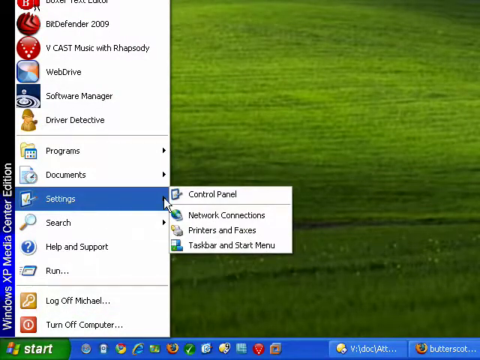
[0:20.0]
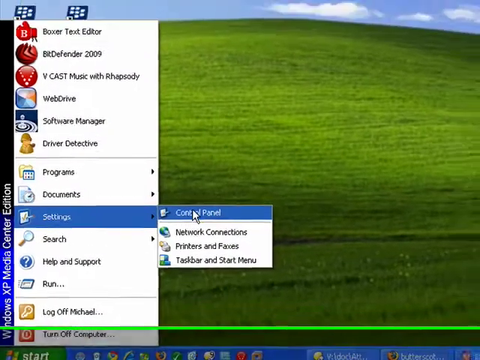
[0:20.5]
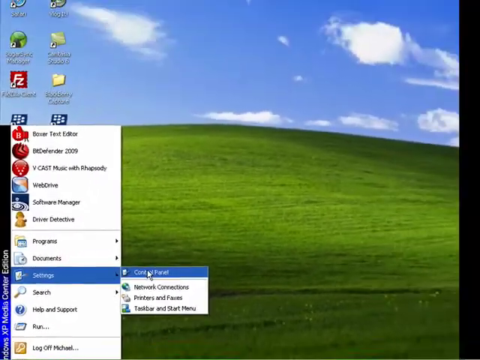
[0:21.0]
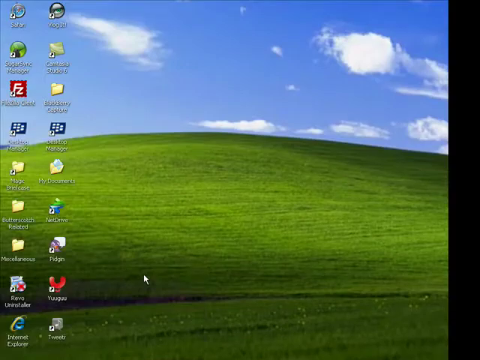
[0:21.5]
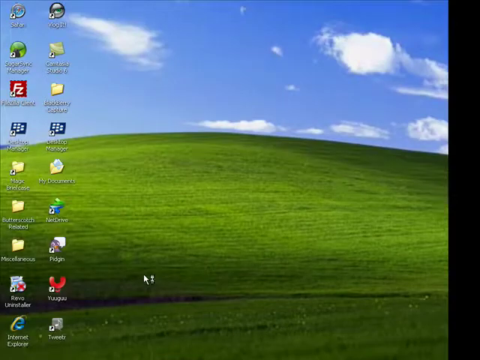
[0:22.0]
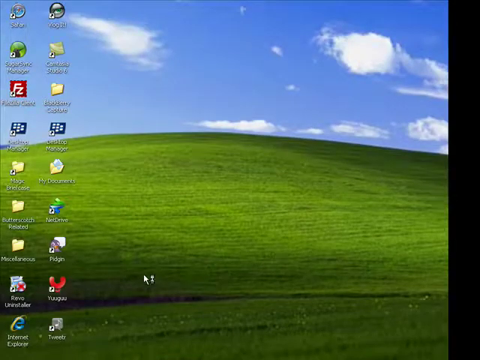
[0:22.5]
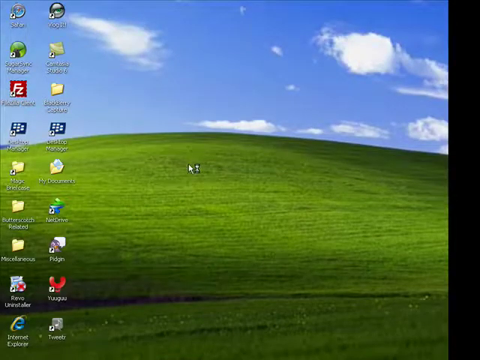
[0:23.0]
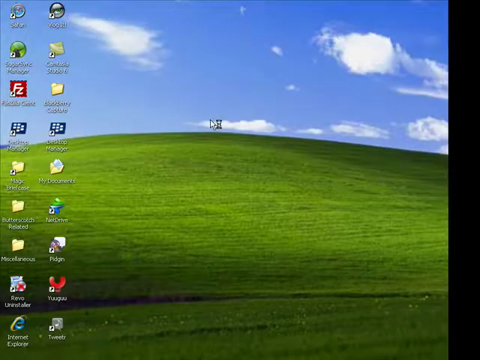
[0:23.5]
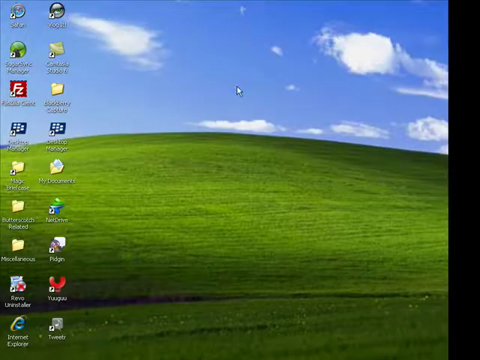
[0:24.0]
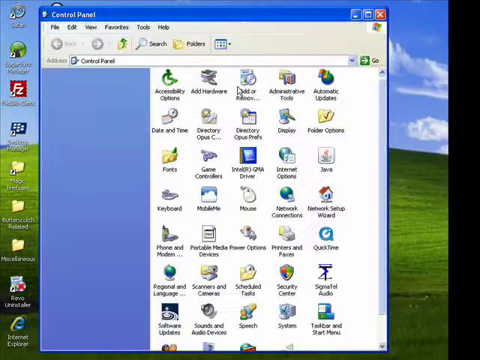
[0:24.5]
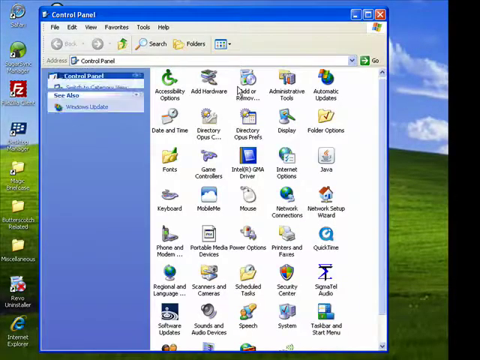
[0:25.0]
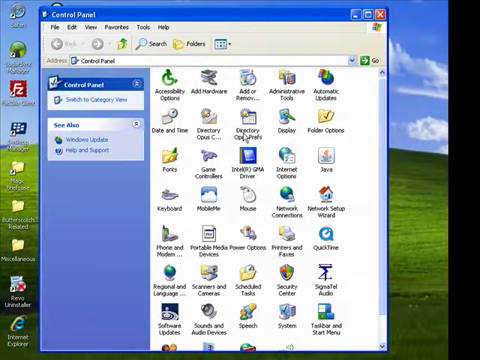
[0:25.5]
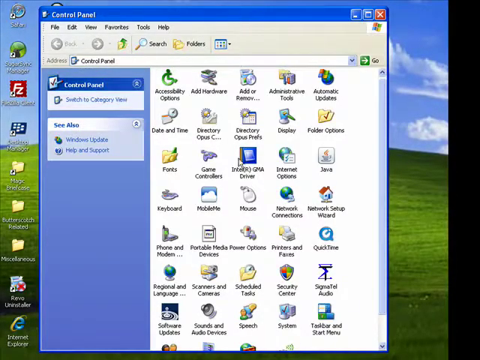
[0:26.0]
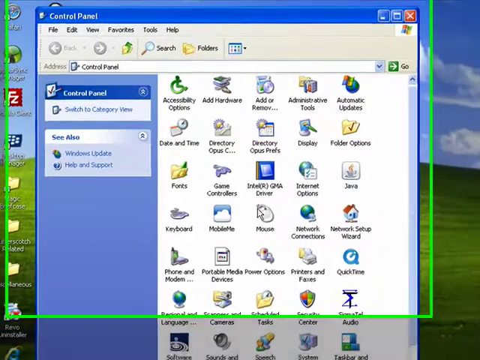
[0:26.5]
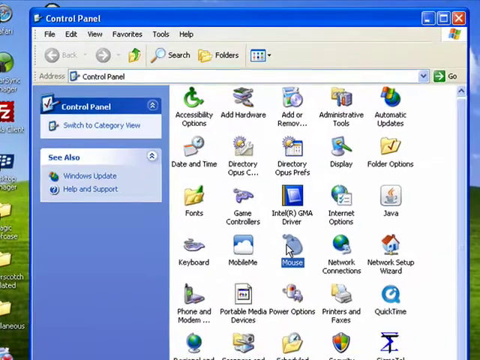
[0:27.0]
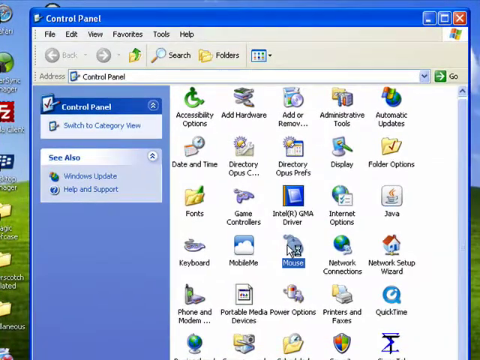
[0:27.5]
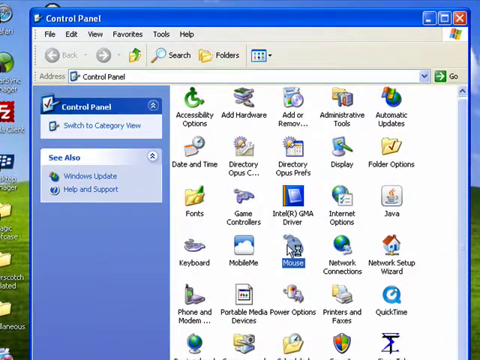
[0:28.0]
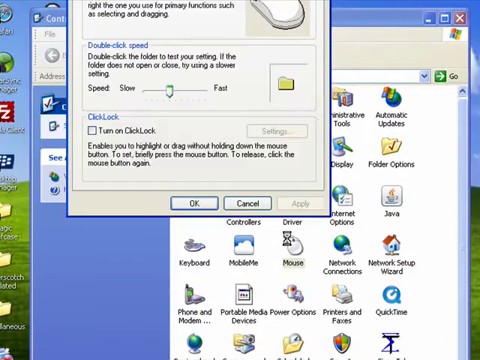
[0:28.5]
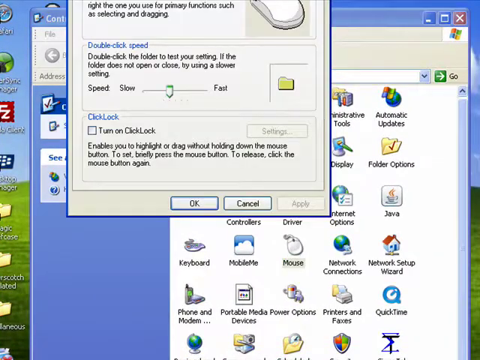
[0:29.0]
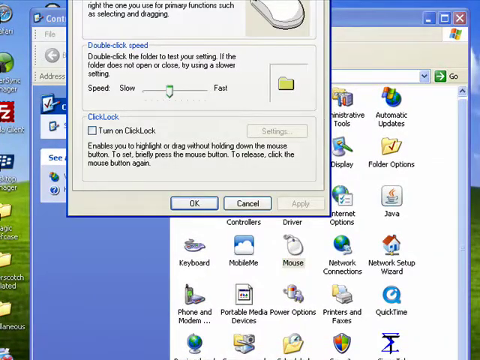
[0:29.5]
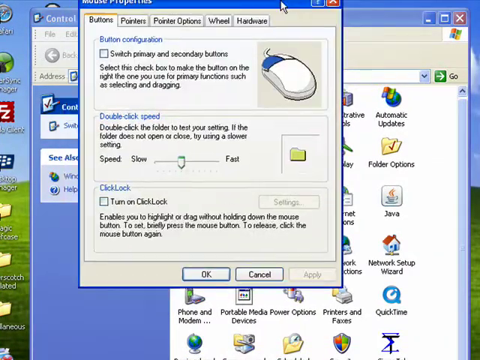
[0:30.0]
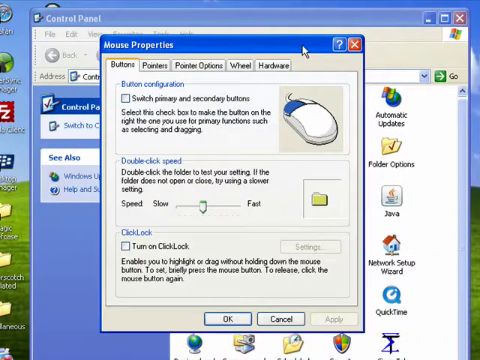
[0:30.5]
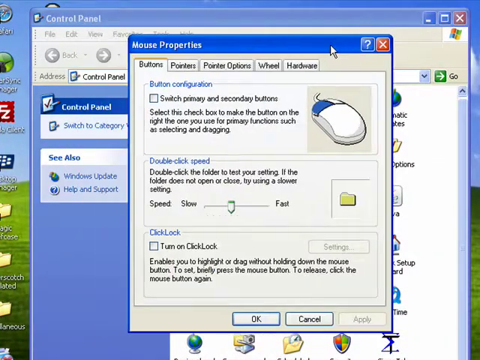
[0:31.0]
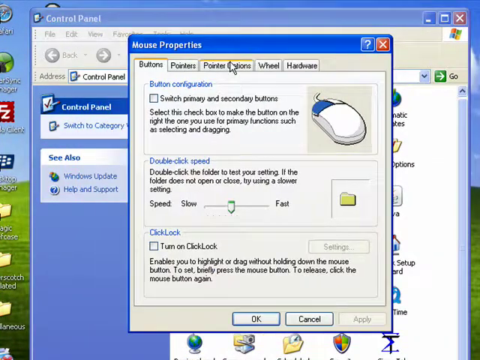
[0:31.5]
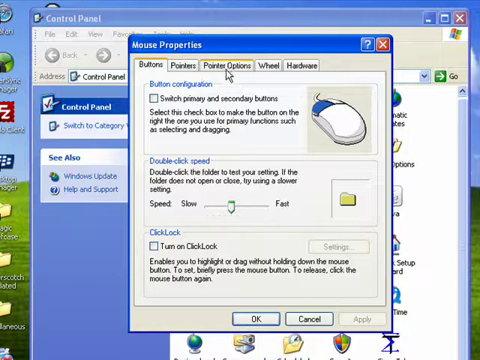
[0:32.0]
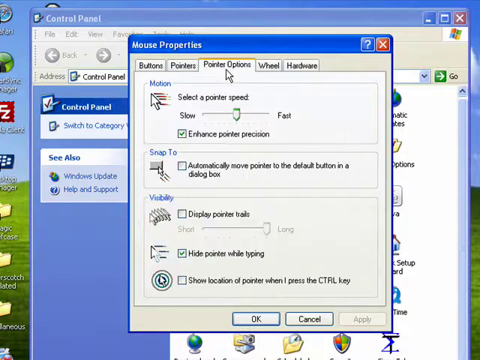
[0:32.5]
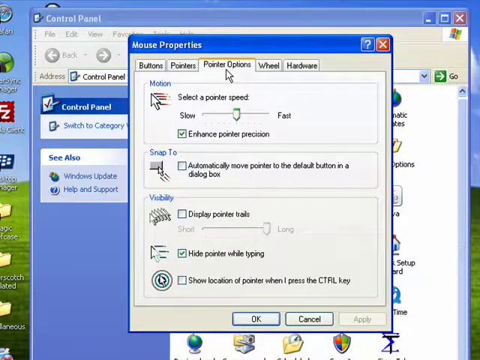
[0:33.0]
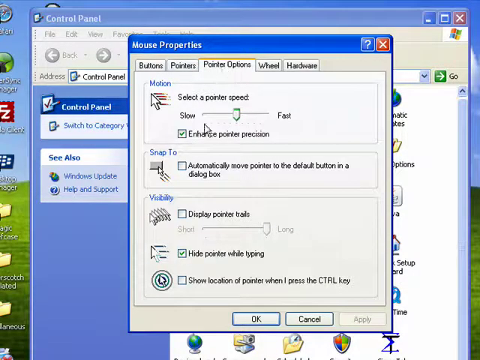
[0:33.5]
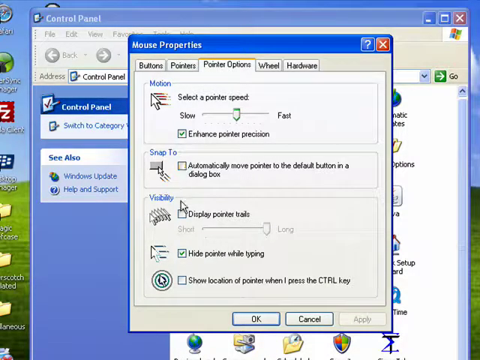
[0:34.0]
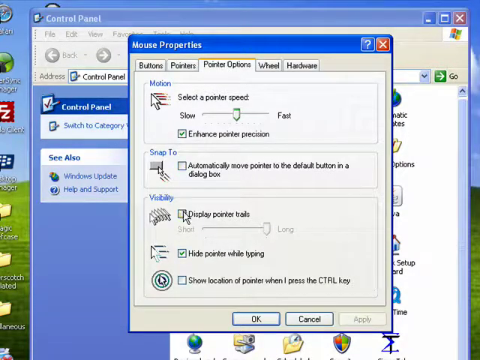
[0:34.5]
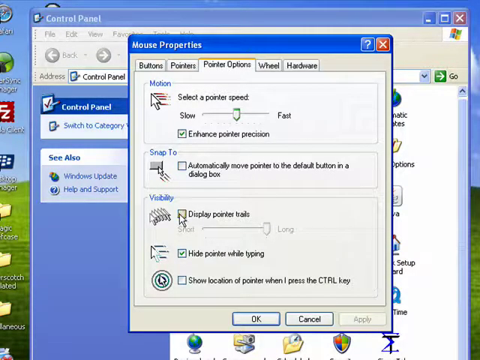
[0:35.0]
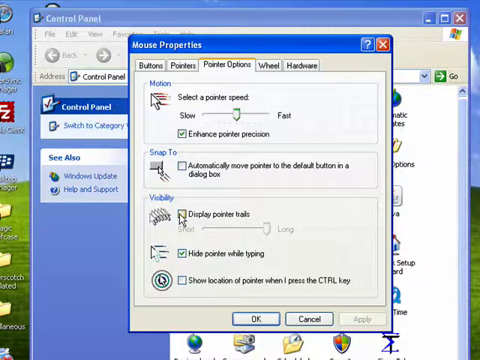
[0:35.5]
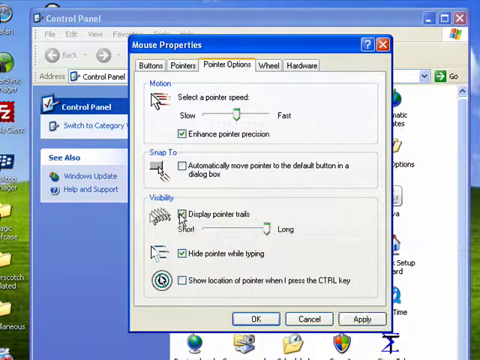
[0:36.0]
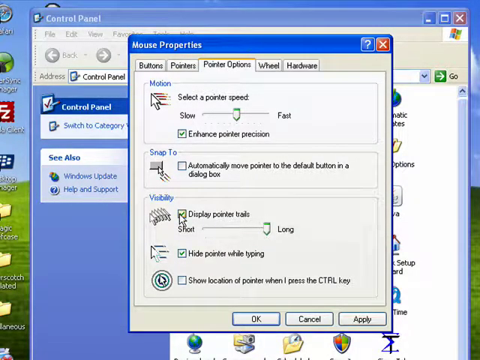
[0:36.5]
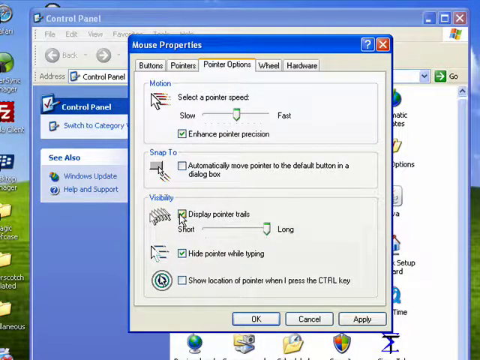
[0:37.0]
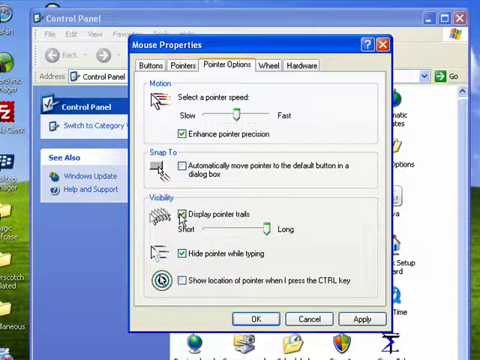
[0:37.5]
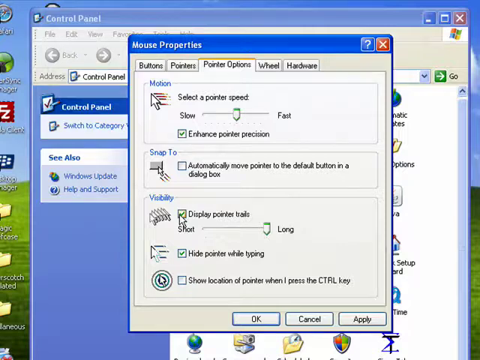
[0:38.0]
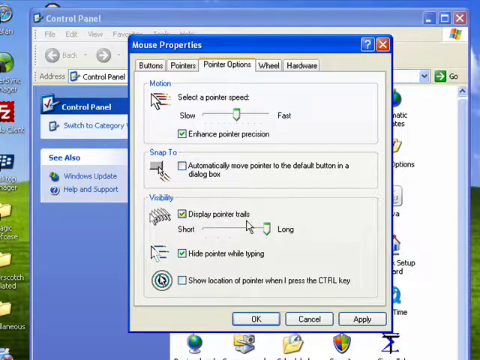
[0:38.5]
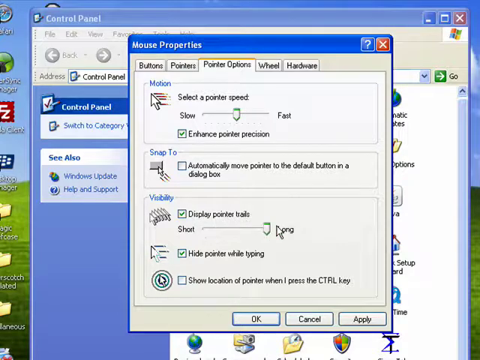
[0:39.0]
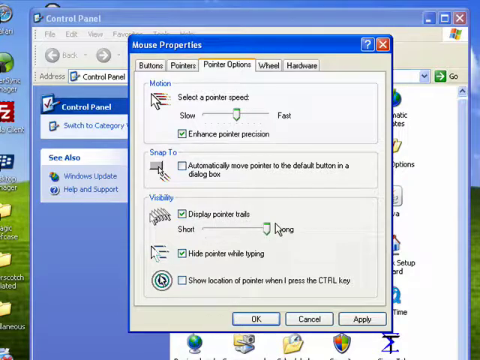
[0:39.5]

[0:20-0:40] The control panel is pulled down and activated, then the view pans back and the mouse moves up. An hourglass appears for a second, then a window comes up bringing the mouse properties page, which is not visible at first. The mouse properties page is dragged down, showing button pointers, pointer options, wheel, and hardware tabs. Pointer options is selected and comes up. Display pointer trails is clicked and long is selected, although that was the default setting. The view then comes back to the control panel.